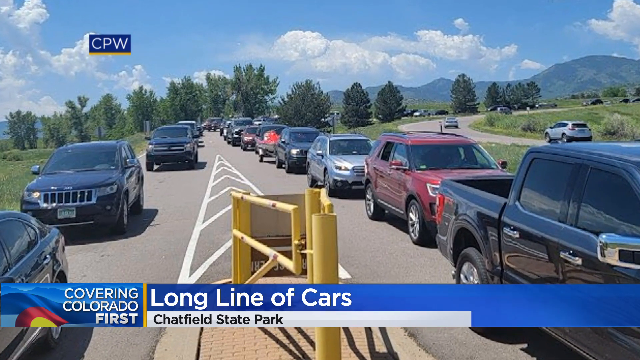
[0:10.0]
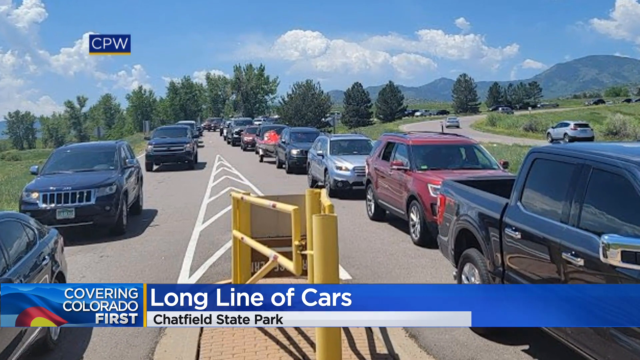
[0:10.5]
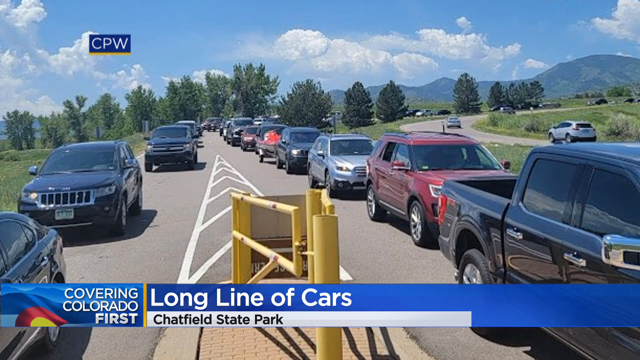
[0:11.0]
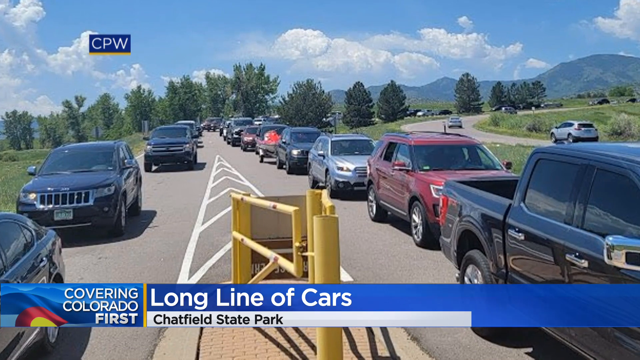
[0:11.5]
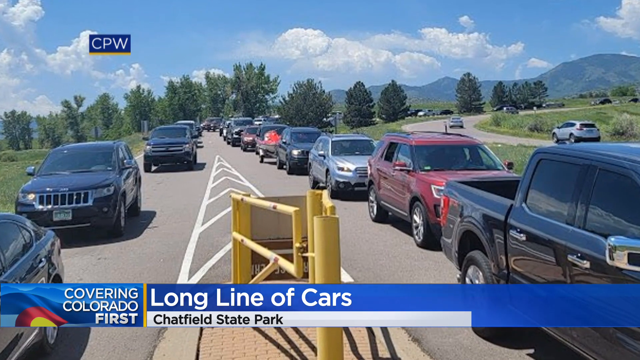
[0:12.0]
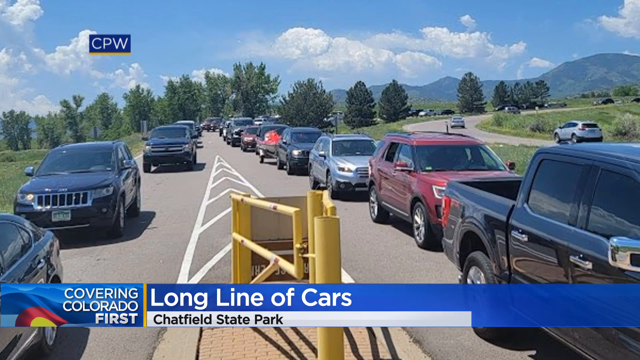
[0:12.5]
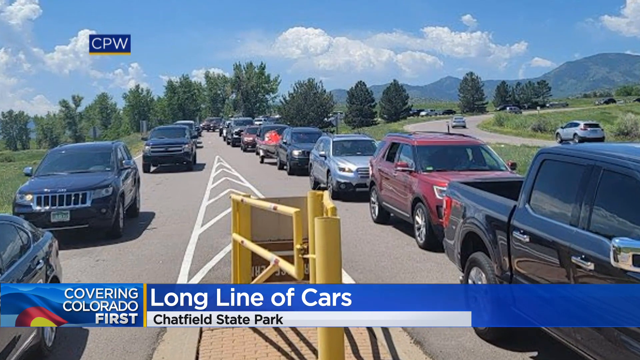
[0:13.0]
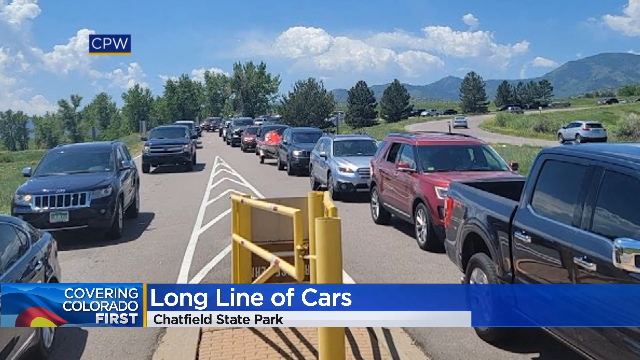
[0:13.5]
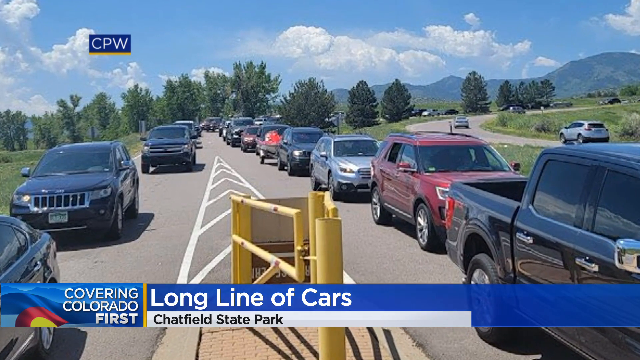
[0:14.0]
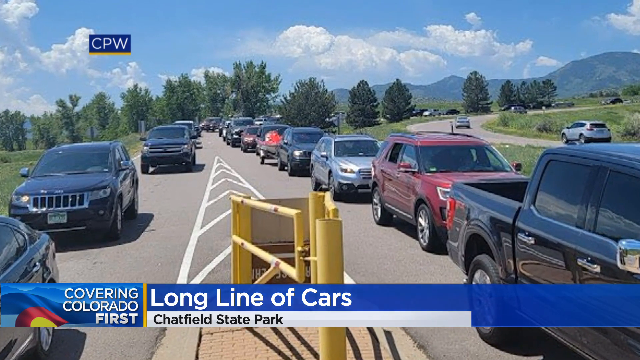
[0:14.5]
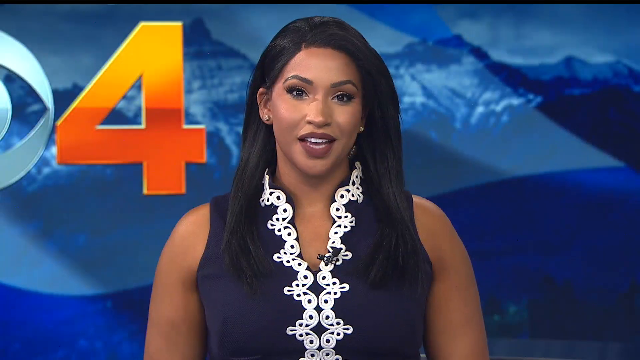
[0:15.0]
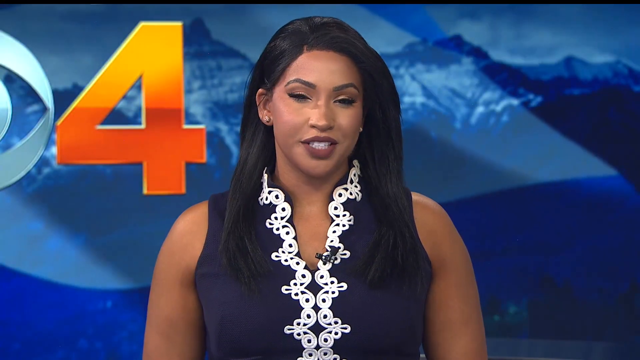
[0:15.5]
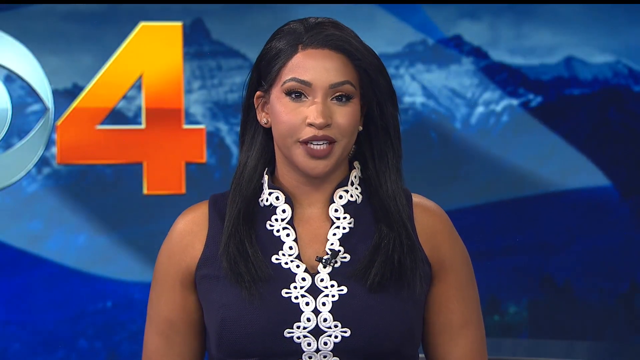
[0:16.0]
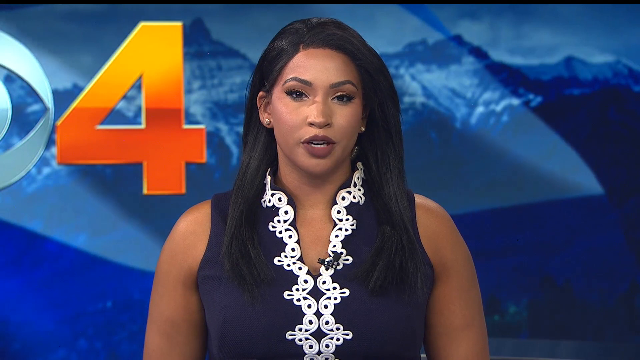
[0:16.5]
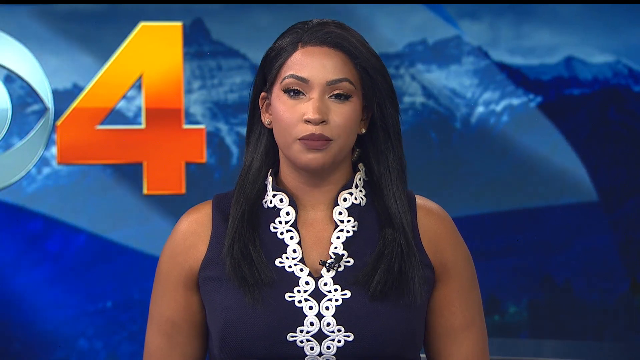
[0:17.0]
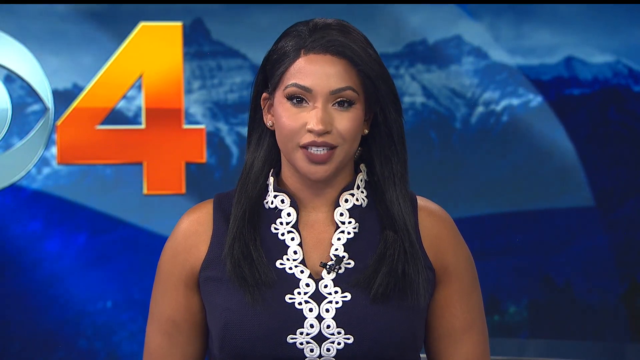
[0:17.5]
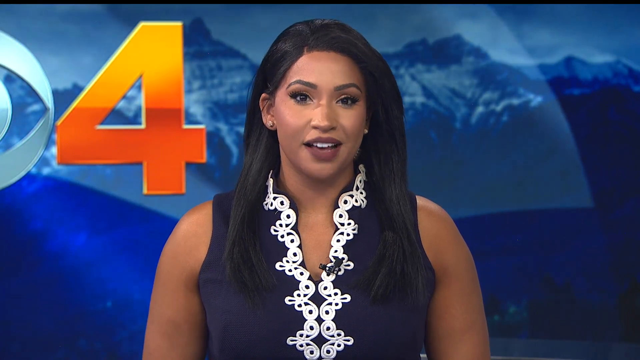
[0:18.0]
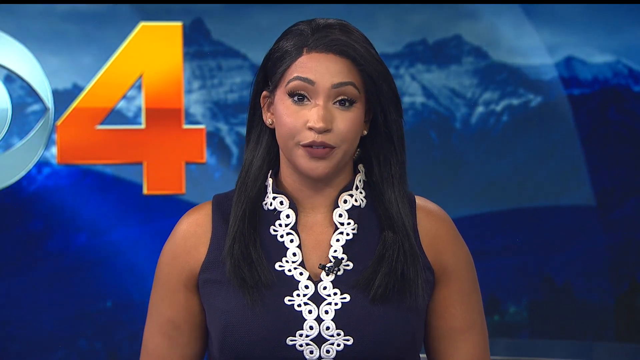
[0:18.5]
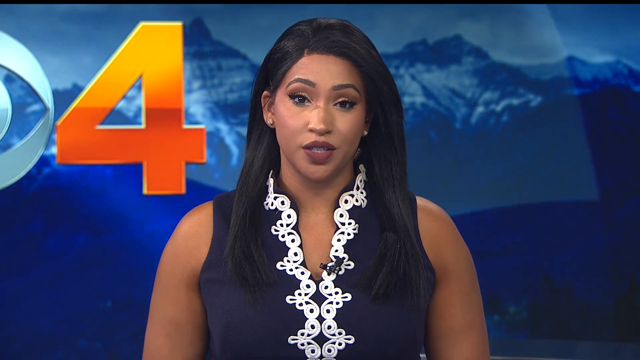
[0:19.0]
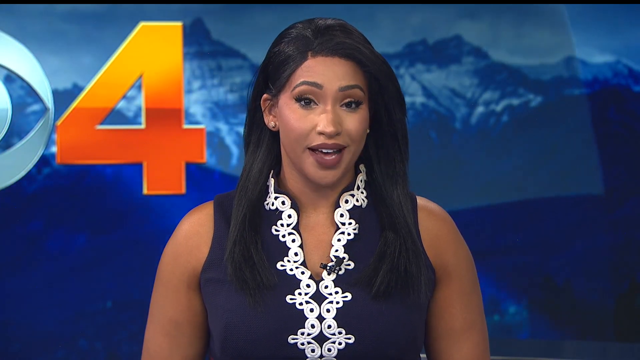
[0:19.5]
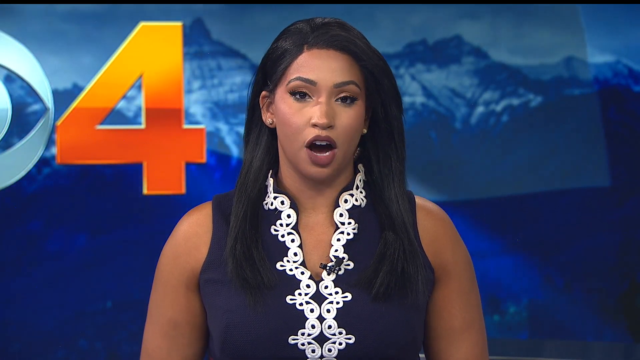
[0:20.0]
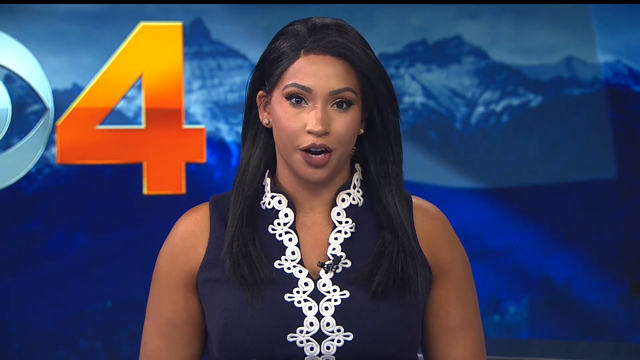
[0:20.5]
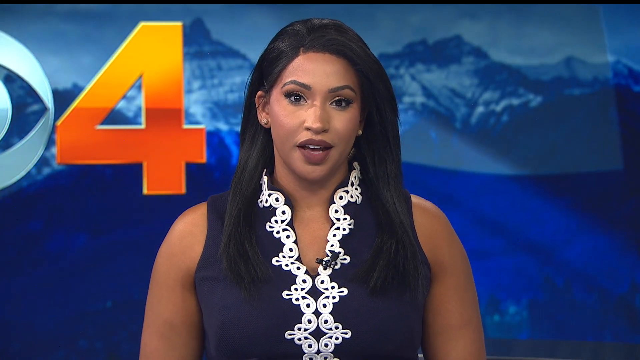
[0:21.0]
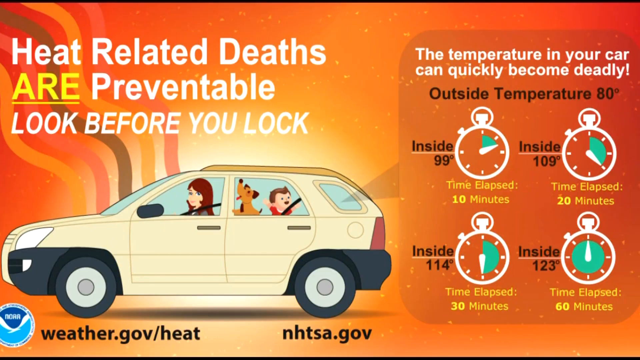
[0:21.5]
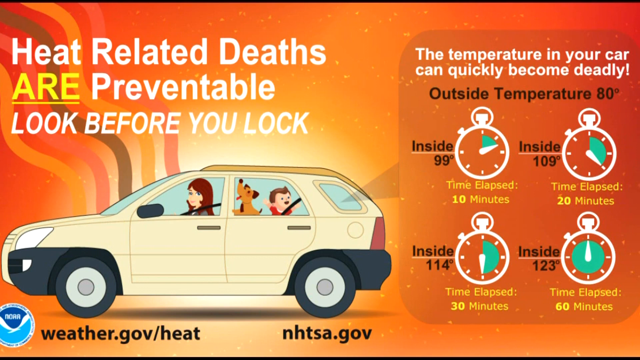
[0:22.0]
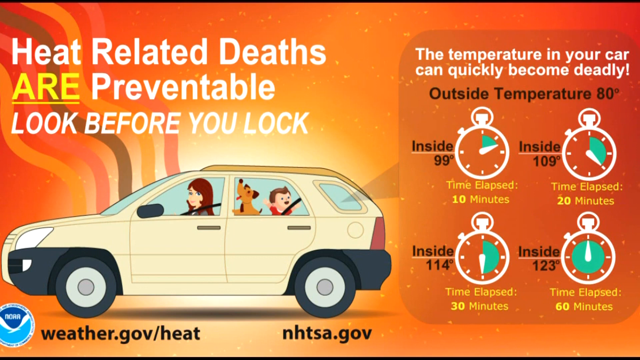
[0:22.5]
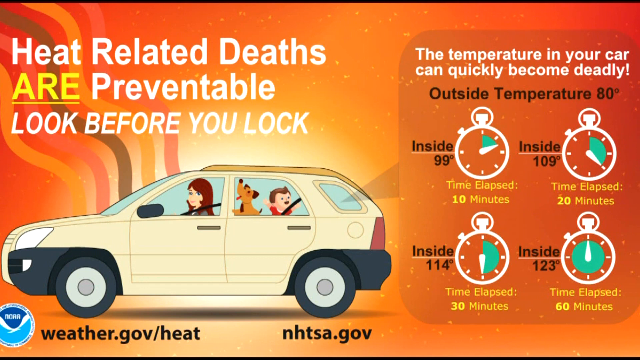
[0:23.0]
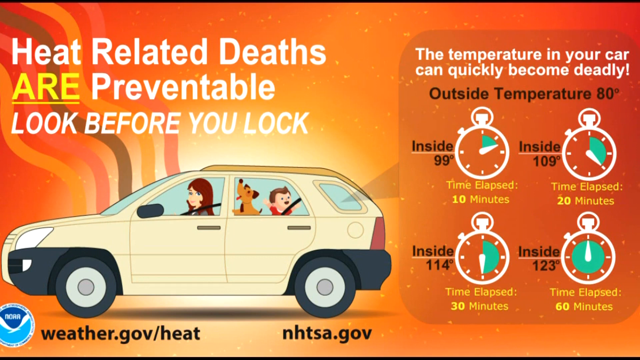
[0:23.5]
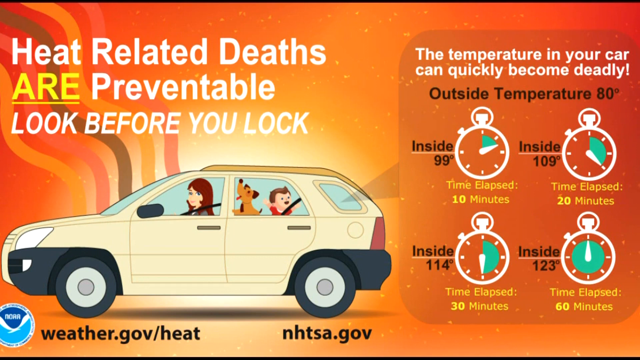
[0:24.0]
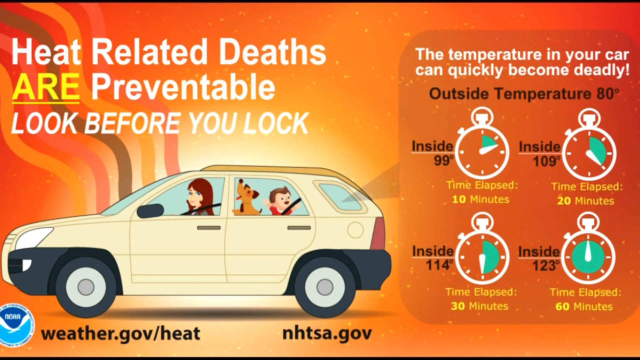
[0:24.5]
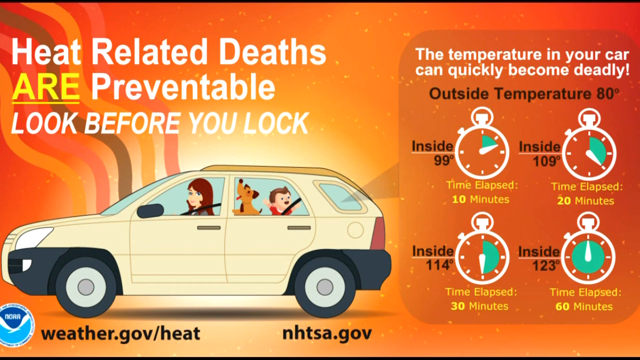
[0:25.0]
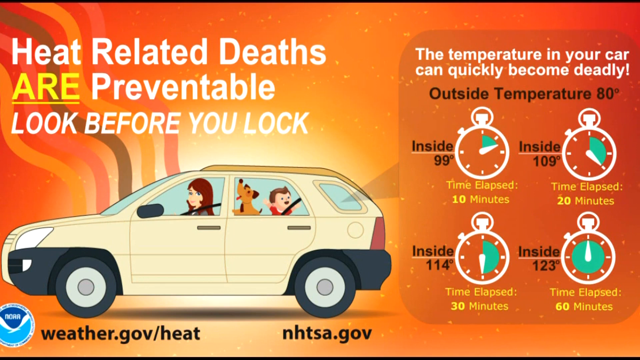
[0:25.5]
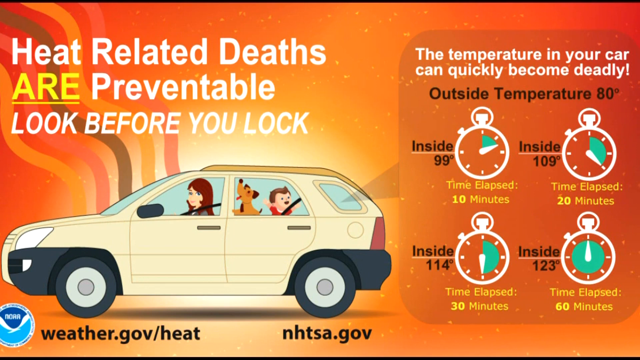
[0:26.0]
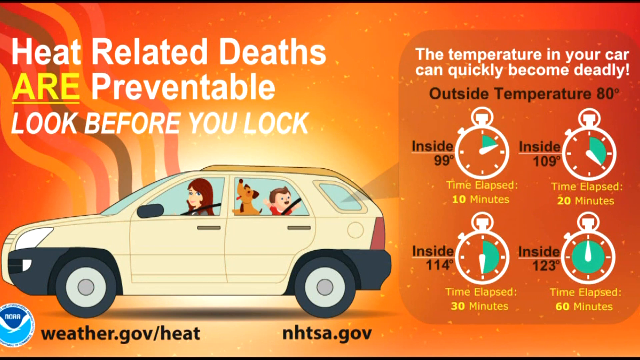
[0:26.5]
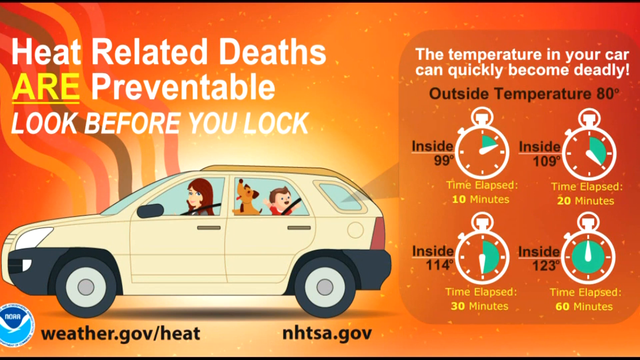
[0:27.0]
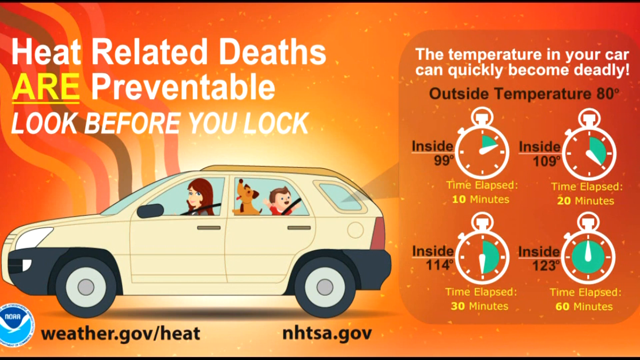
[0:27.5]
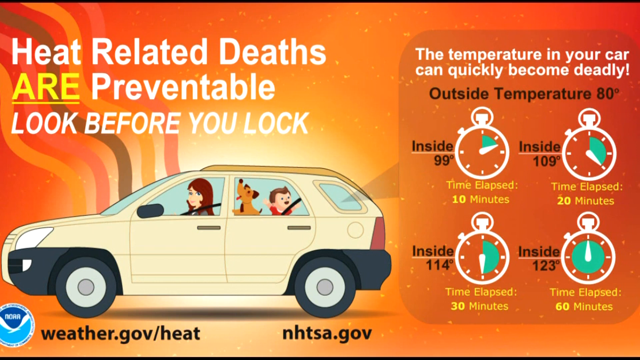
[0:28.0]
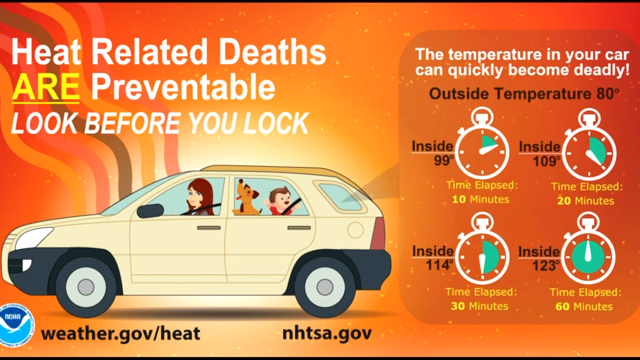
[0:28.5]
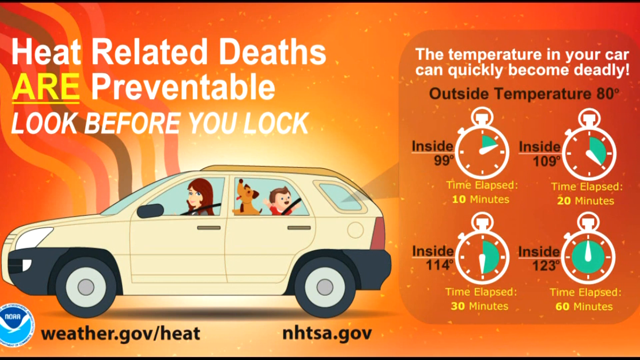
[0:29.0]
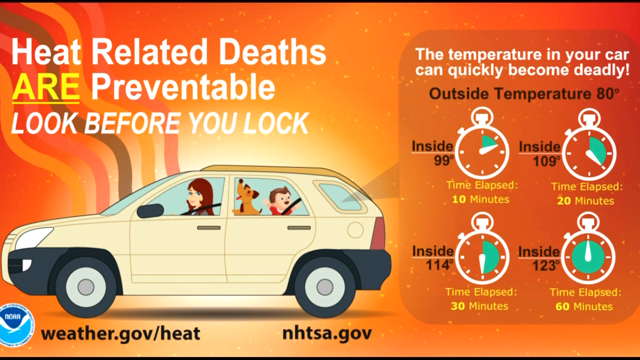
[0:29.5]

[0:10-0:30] The video has three sections. The first shows a long line of cars at the gate of some type of establishment, with a blue banner at the bottom of the screen; this is footage from the news. The camera then cuts back to the news anchor, who has a channel 4 behind her, a big orange 4. She has long, dark brown hair and wears a dark navy vest-style dress with a white lace decorative piece going down it. The last section shows a chart that says "heat related deaths are preventable. Look before you lock." This is probably a PSA about not leaving children or dogs in a hot car.